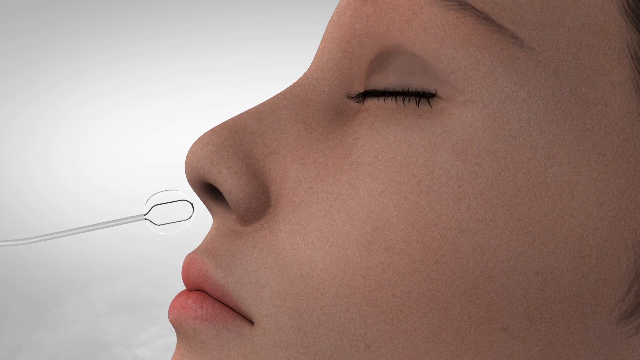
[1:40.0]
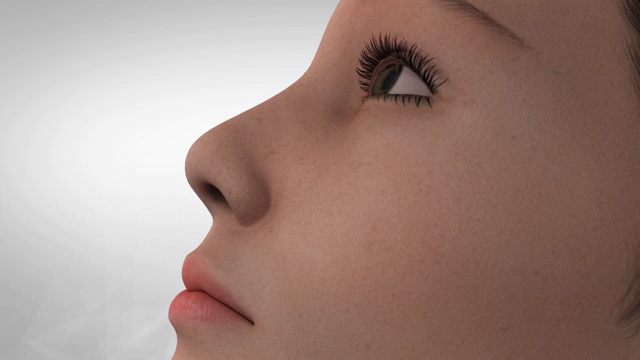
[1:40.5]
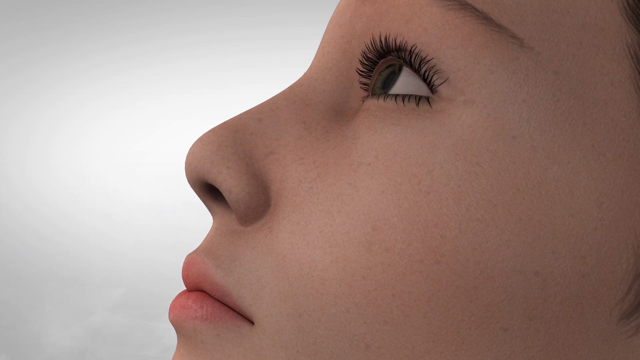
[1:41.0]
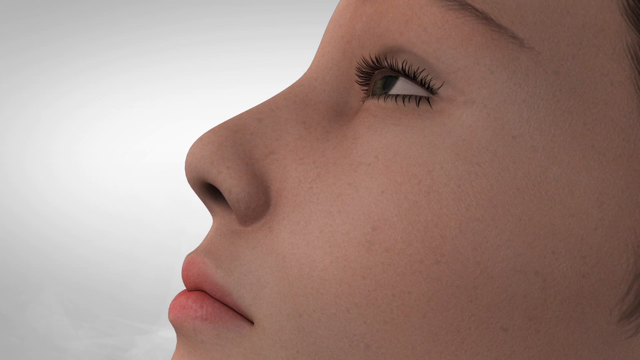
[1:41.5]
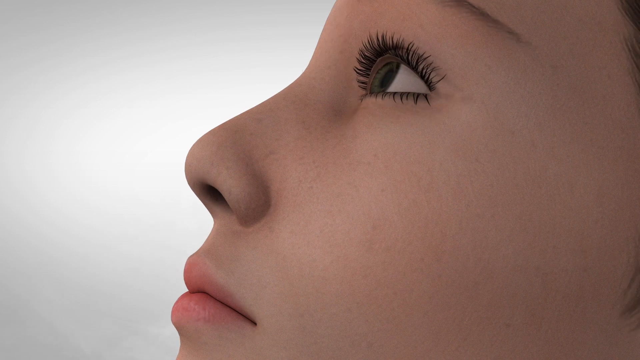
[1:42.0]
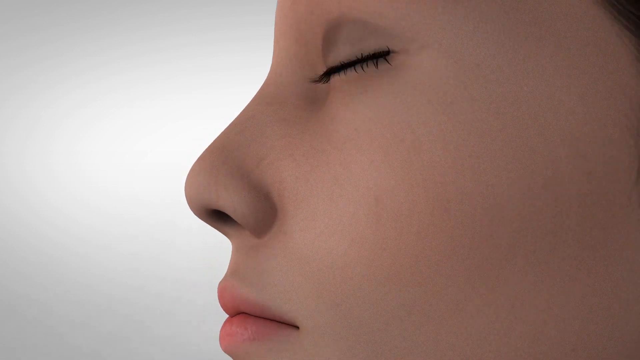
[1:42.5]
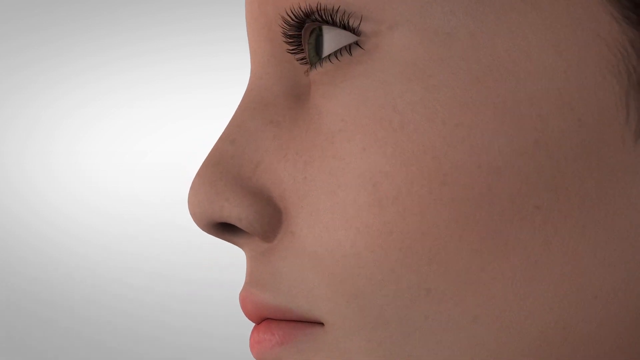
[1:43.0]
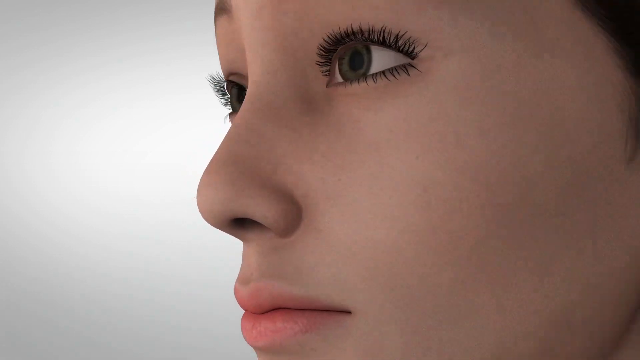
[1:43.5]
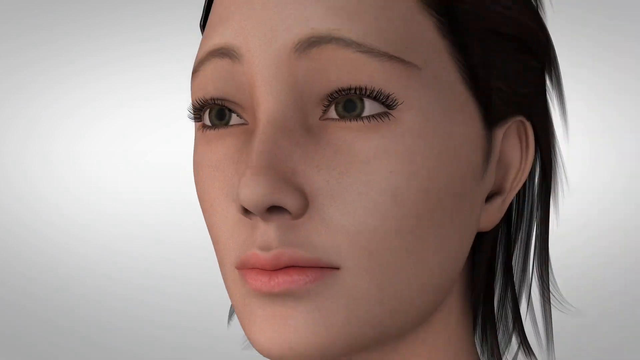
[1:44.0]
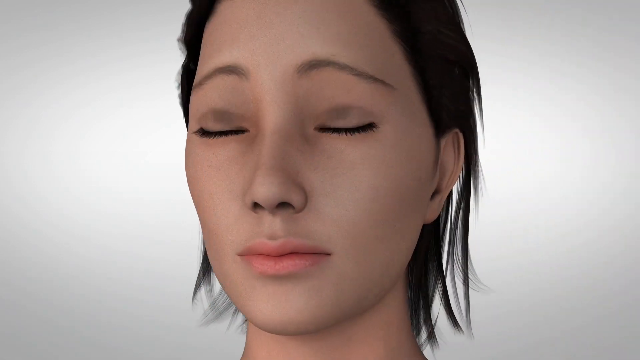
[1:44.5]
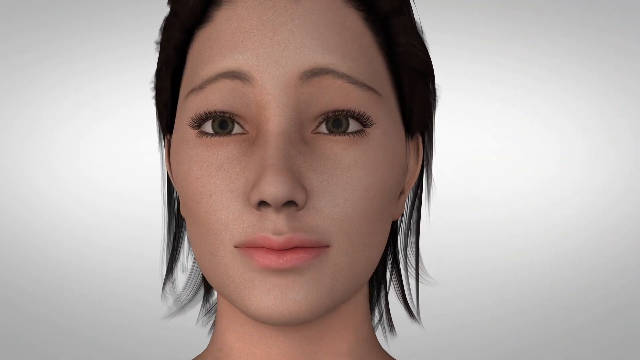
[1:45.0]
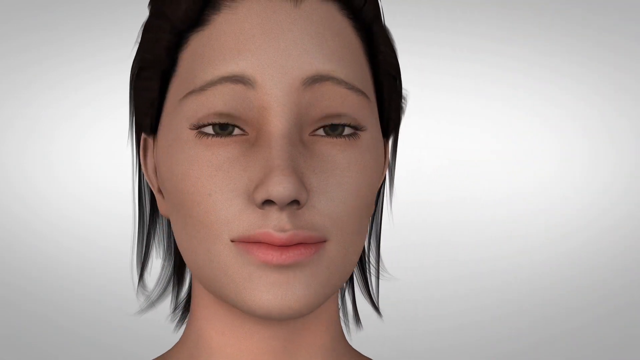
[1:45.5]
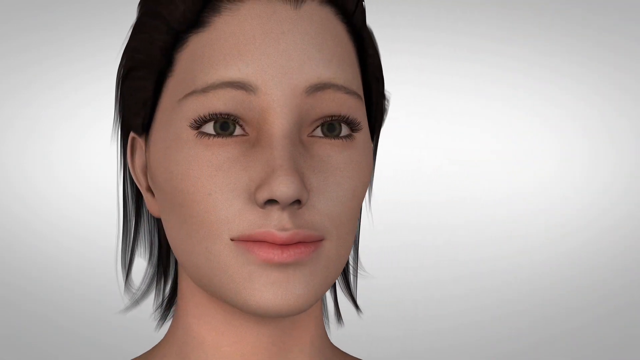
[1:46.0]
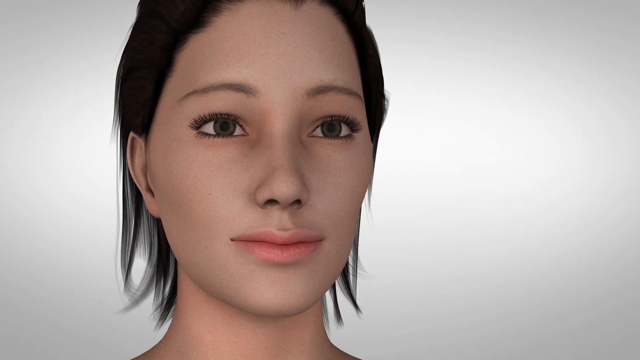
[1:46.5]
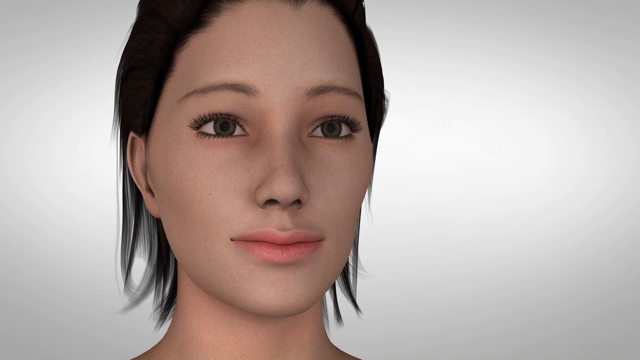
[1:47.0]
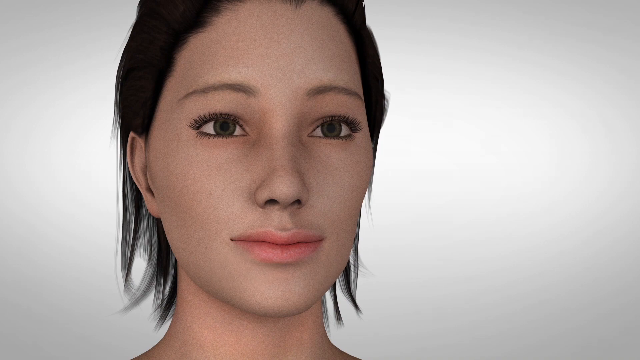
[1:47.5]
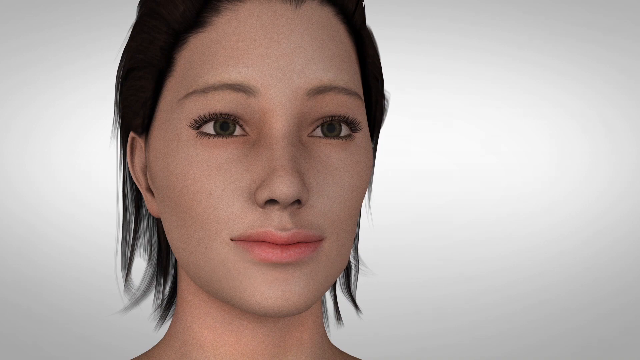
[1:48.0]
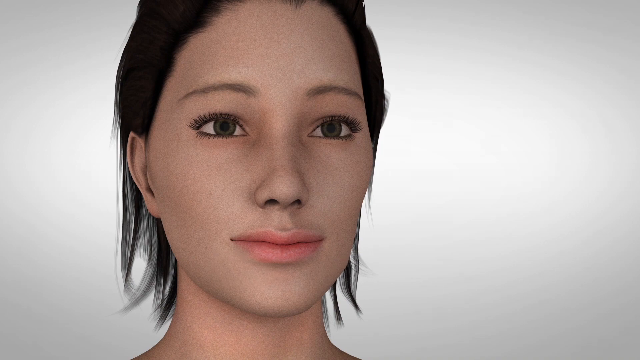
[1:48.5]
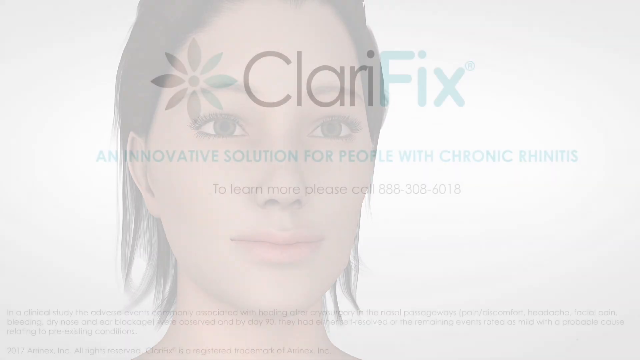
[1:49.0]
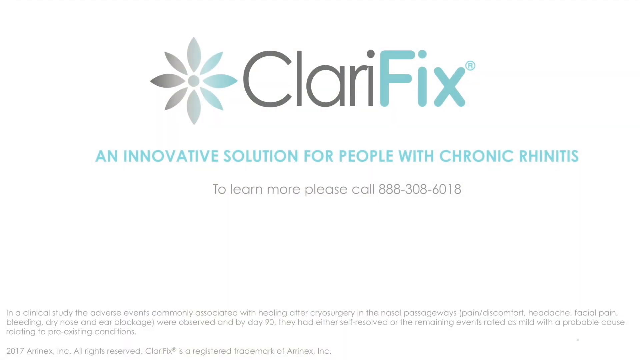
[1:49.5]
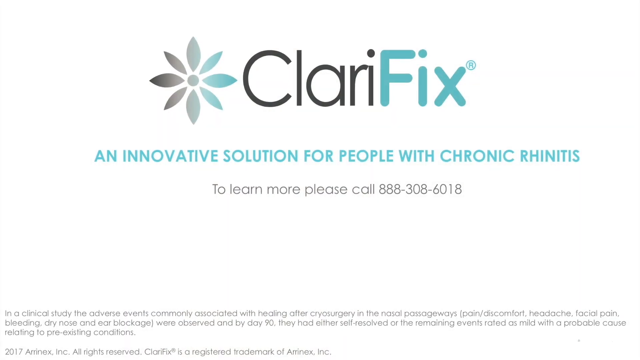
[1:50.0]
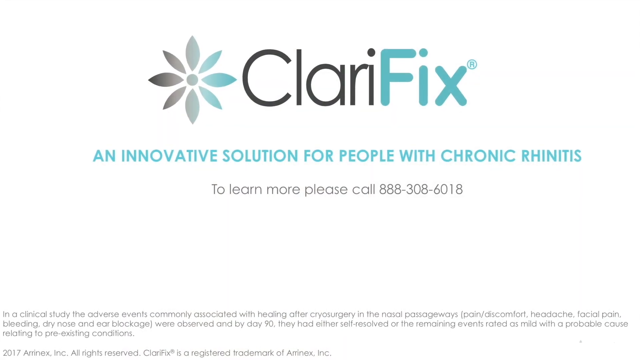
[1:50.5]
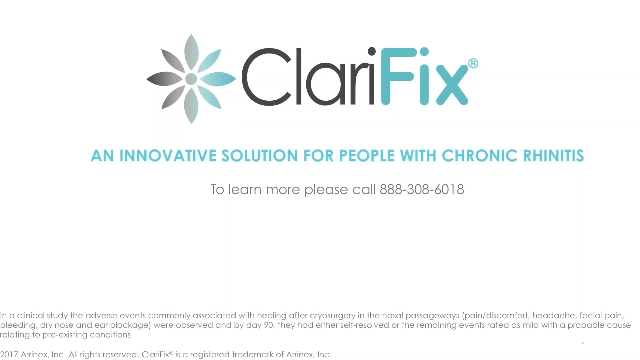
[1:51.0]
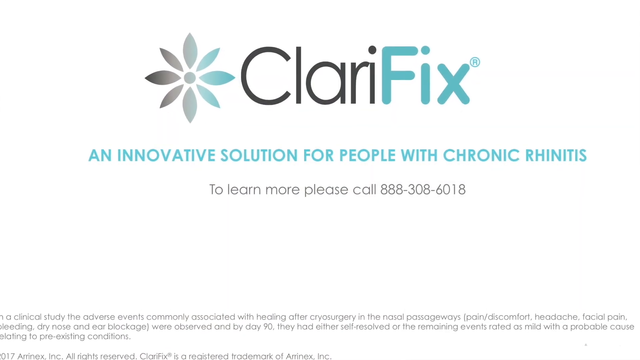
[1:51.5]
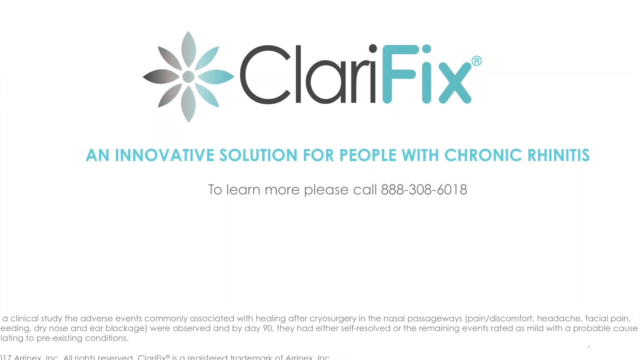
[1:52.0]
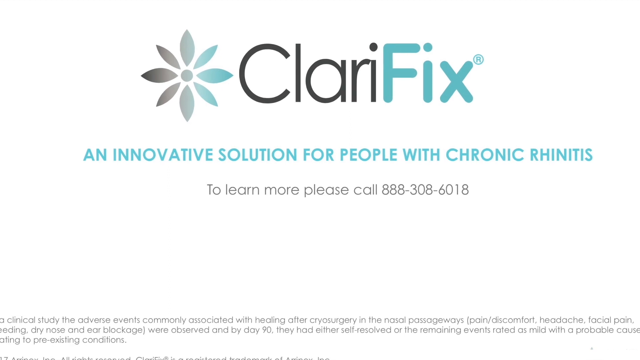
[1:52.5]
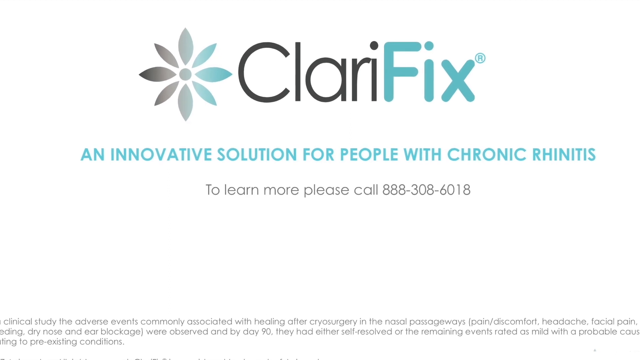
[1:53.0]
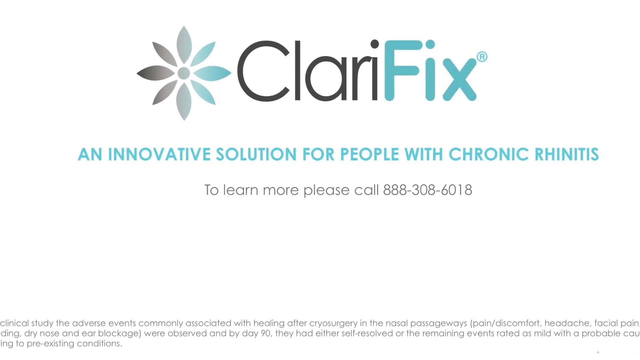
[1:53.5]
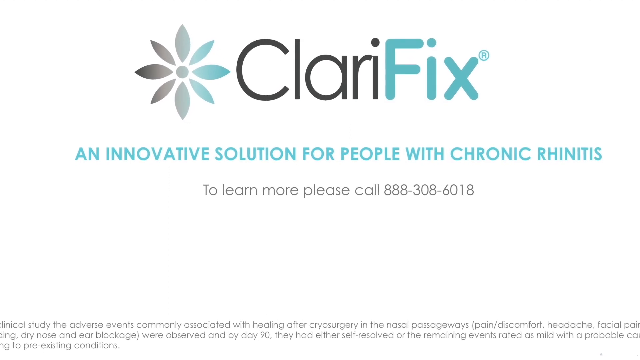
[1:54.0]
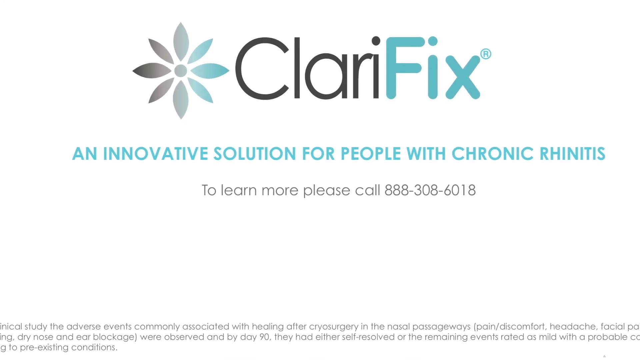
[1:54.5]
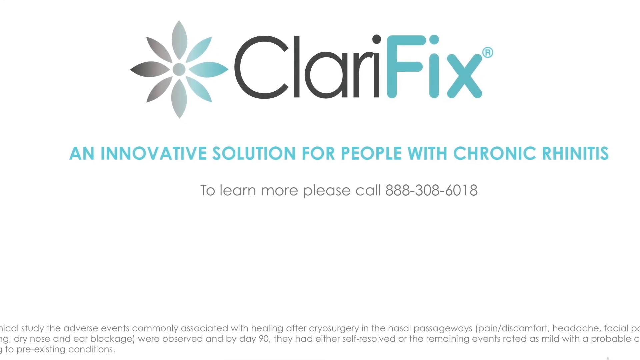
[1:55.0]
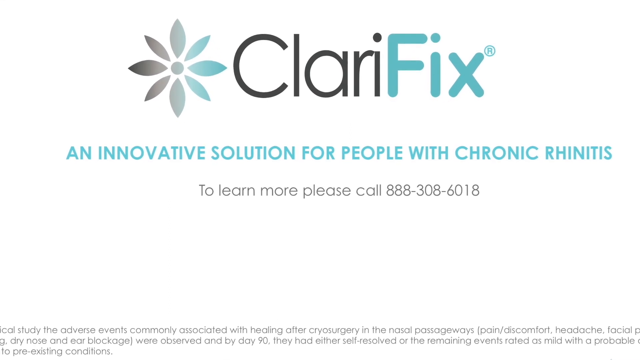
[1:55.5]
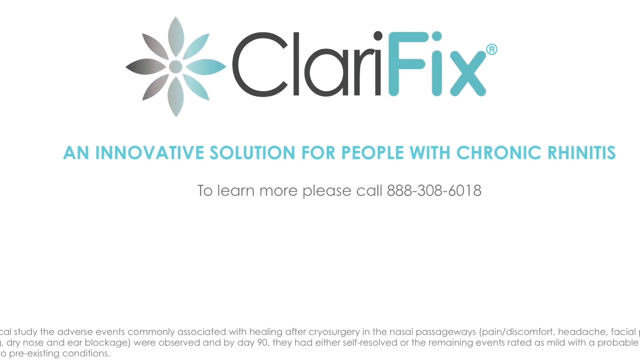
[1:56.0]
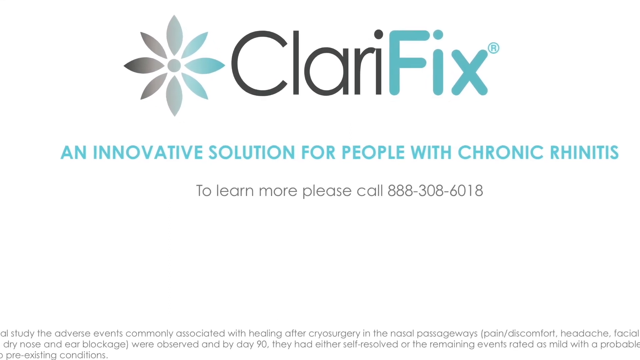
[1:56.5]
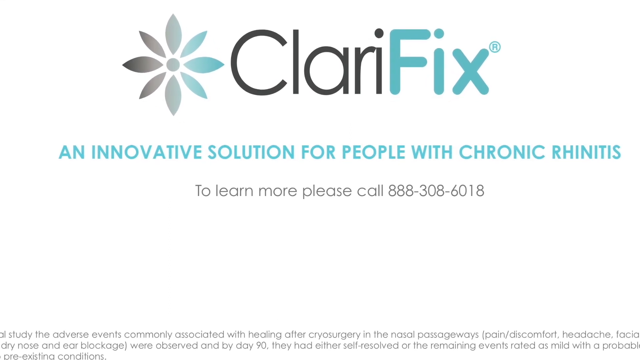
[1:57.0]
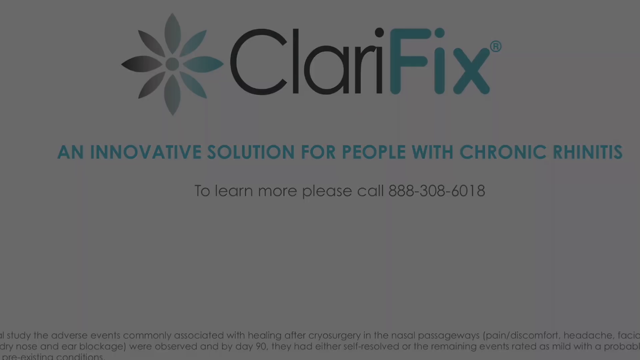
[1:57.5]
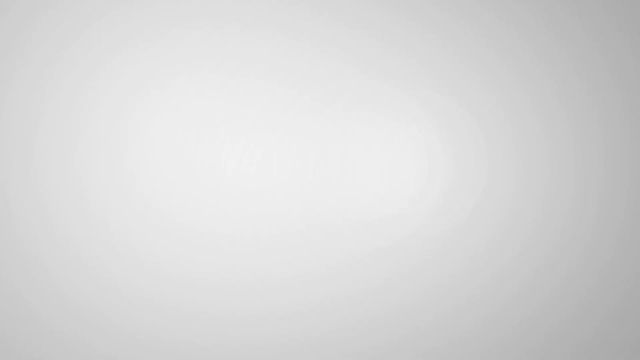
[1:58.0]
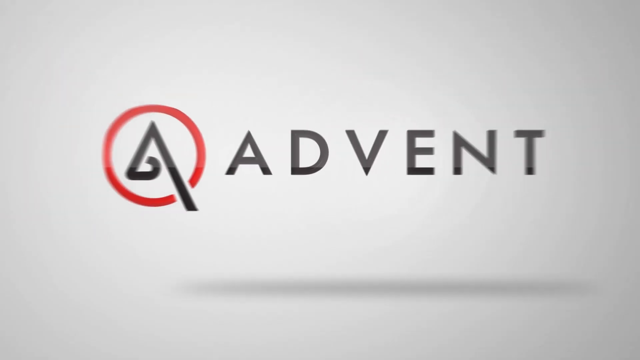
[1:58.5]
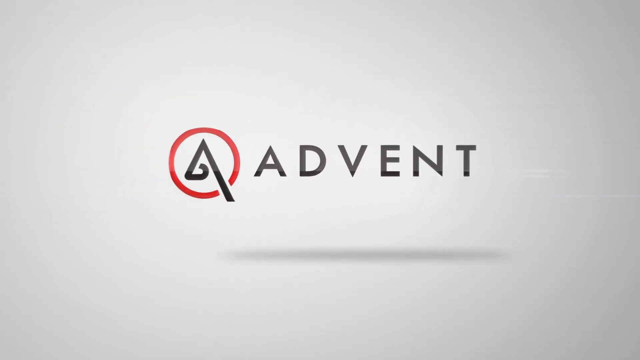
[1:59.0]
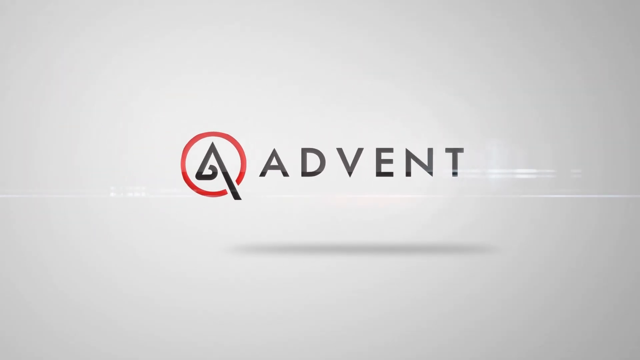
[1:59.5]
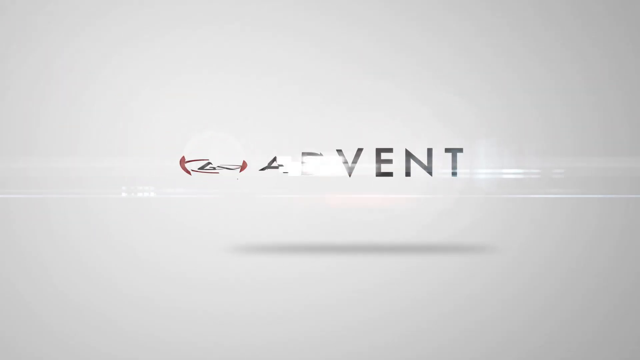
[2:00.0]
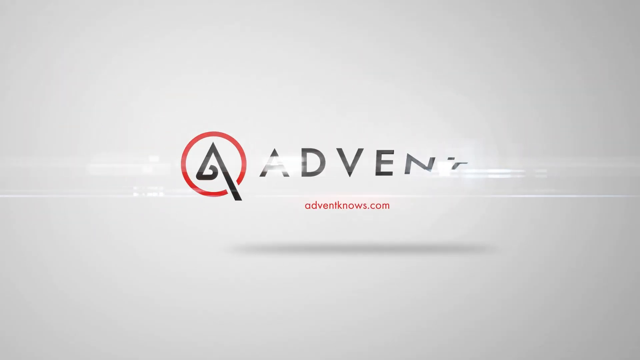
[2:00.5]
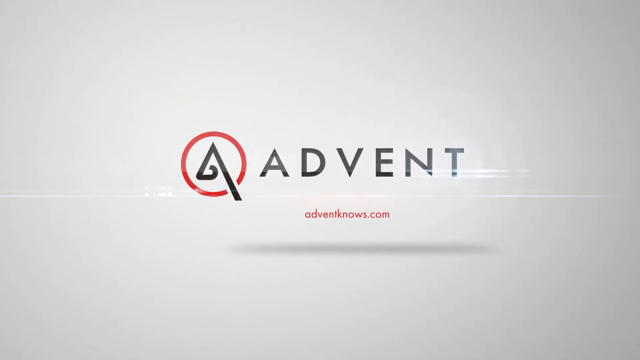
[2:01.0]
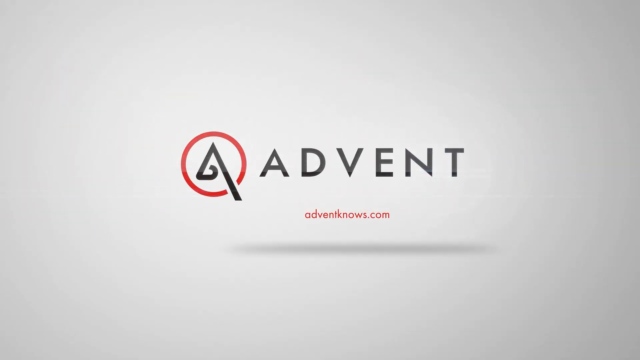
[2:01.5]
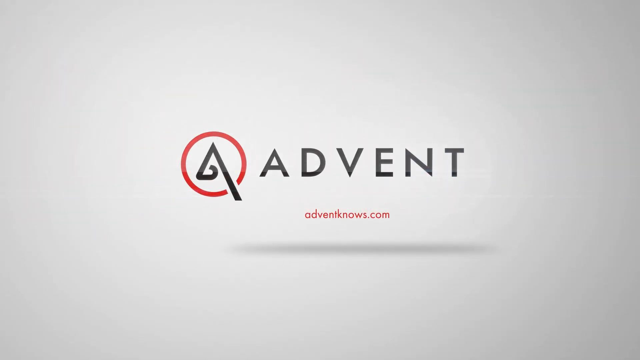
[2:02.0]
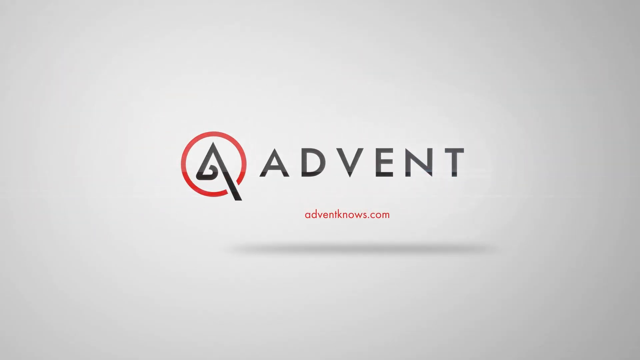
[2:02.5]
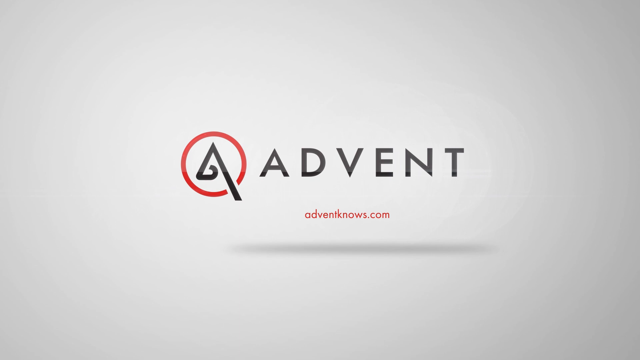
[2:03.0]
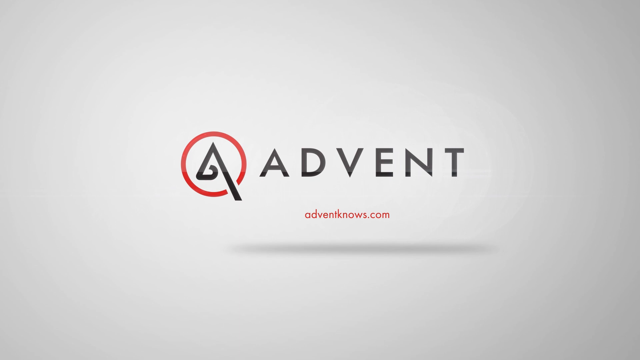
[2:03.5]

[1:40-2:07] On a gray background is a CGI woman with some kind of device pointed at her nose; it looks like a long, flexible tube with a flat part at the end. It pulls away from her, and she opens her eyes and blinks multiple times. Her head rotates, and suddenly her whole face turns toward the viewer, showing light skin, dark eyes, thin eyebrows, scraggly thin black hair and pink lips. She smiles while blinking and turns slightly to the side. The video then moves to a page with a logo: a flower in a gray to blue gradient, with "Clari" in black text and "Fix" in blue text. Underneath in blue it reads "an innovative solution for people with chronic rhinitis," and below that in tiny black letters, "to learn more, please call 888-308-6018." The view zooms in on the page so that the image starts to fill the screen, then switches to zooming in on another logo: a red circle with what looks like an A in it, except the left side of the A is shorter and curls. Black text next to it says "Advent." It rotates, and red text appears underneath saying "adventnose.com." The view stays on this for a few seconds.